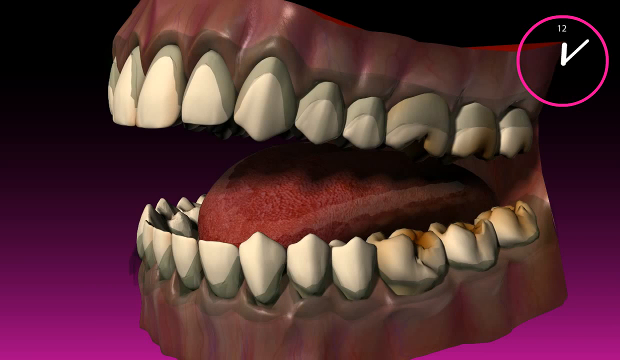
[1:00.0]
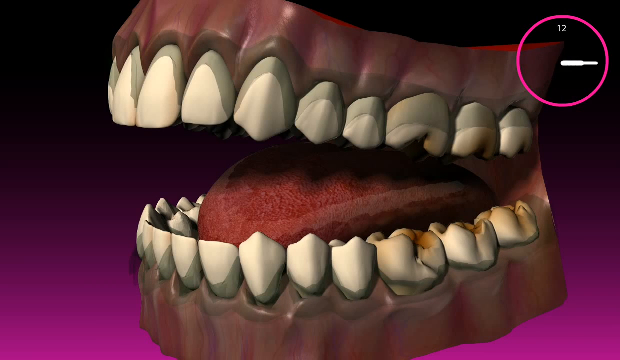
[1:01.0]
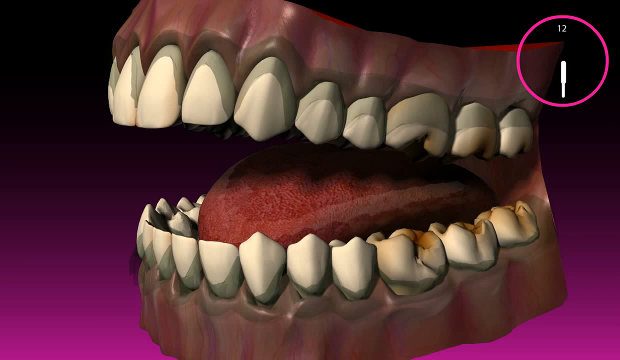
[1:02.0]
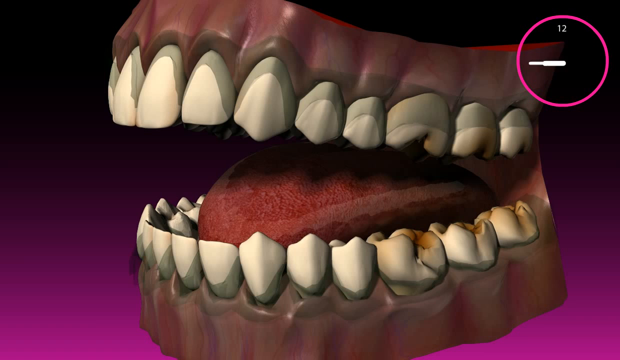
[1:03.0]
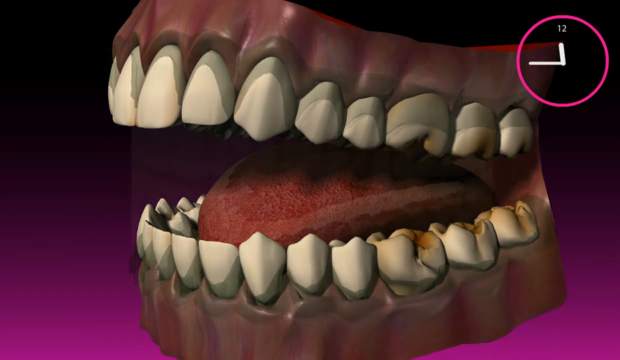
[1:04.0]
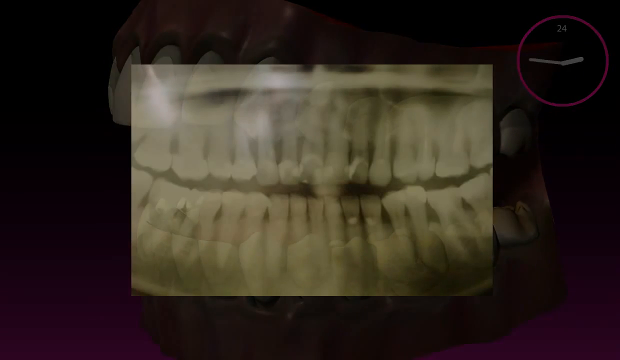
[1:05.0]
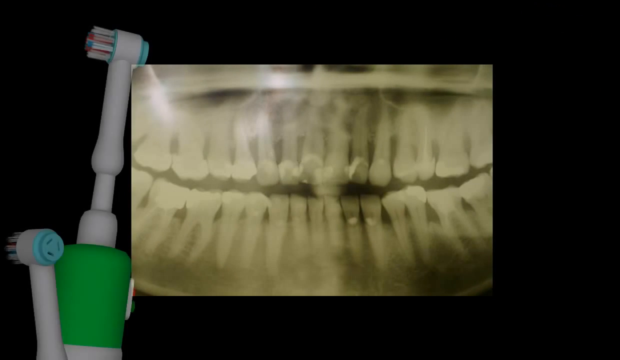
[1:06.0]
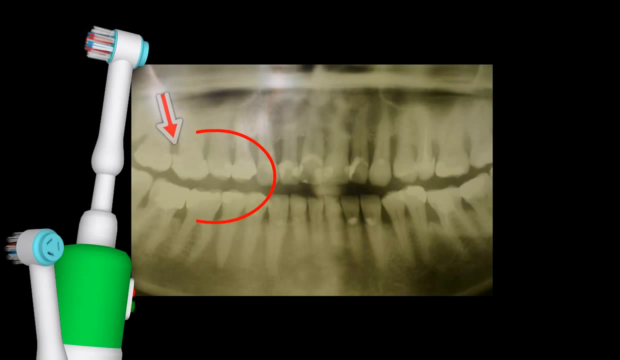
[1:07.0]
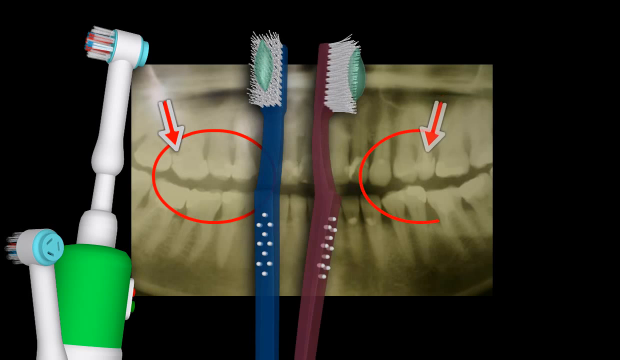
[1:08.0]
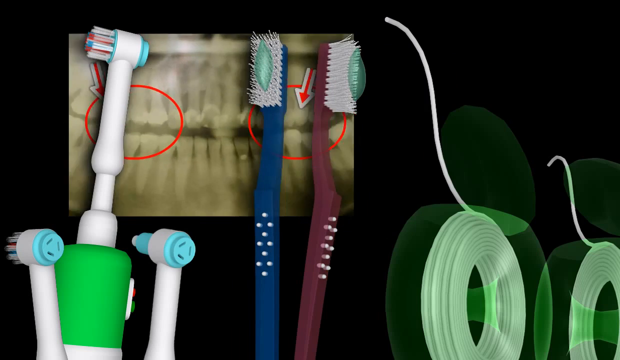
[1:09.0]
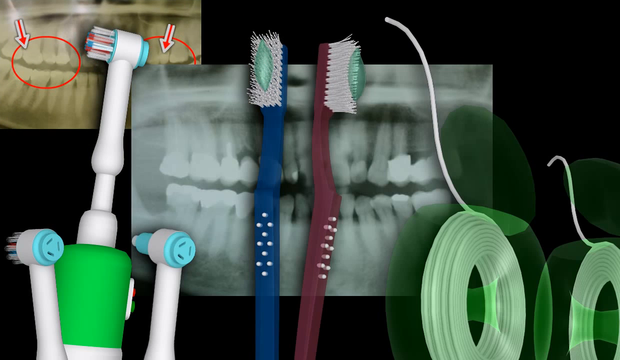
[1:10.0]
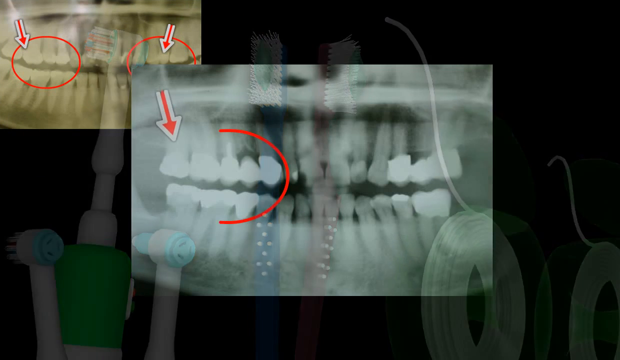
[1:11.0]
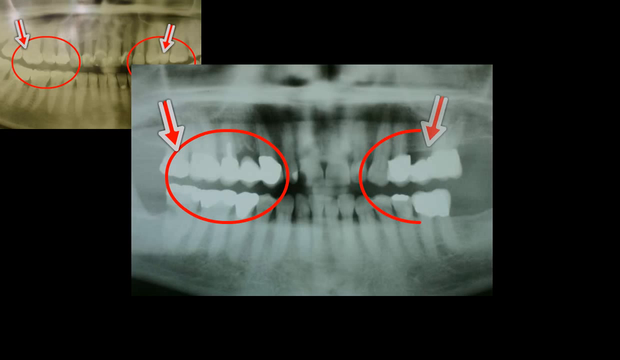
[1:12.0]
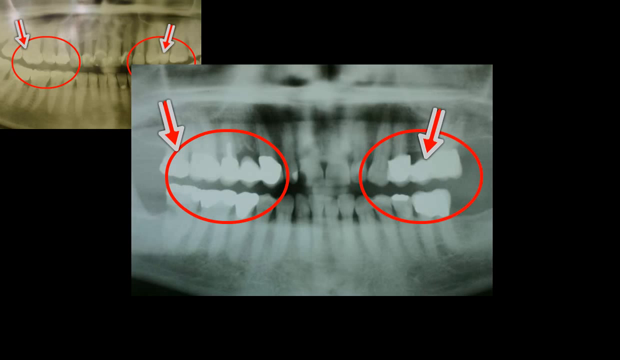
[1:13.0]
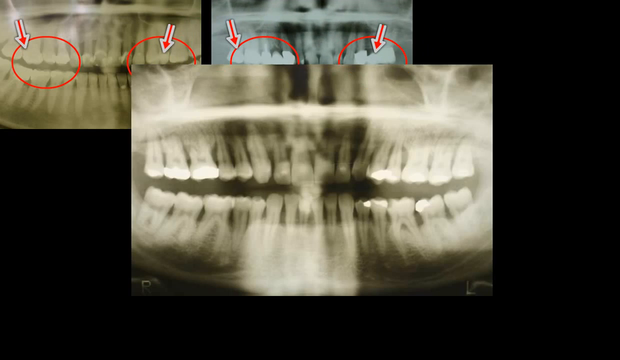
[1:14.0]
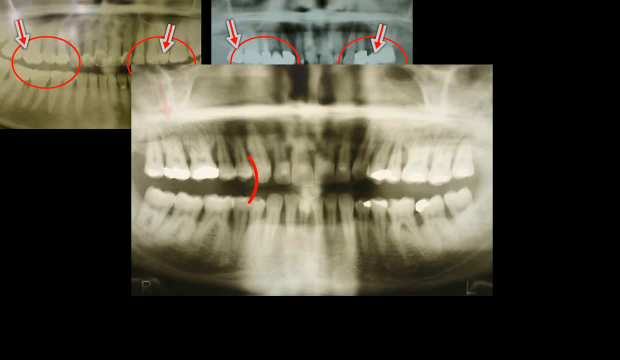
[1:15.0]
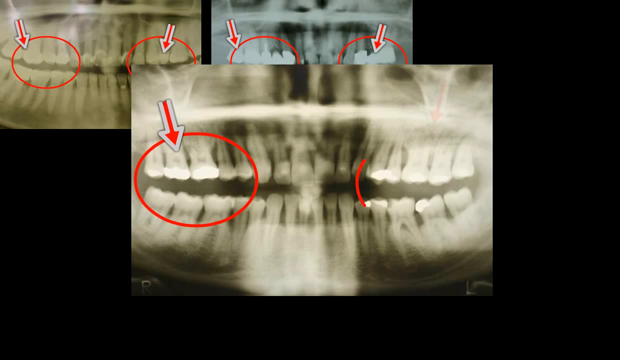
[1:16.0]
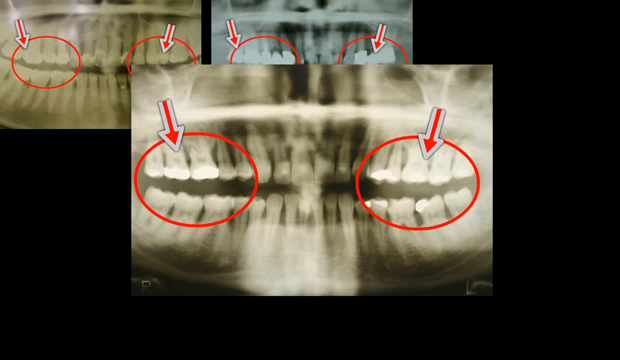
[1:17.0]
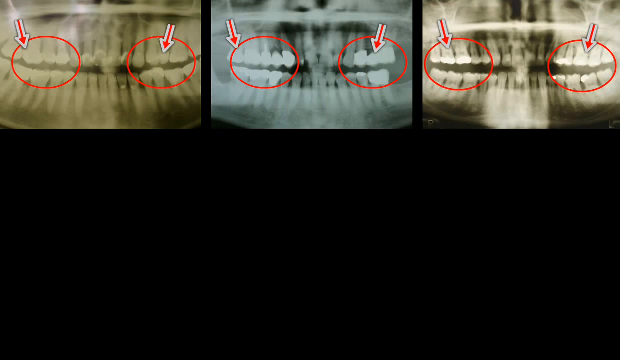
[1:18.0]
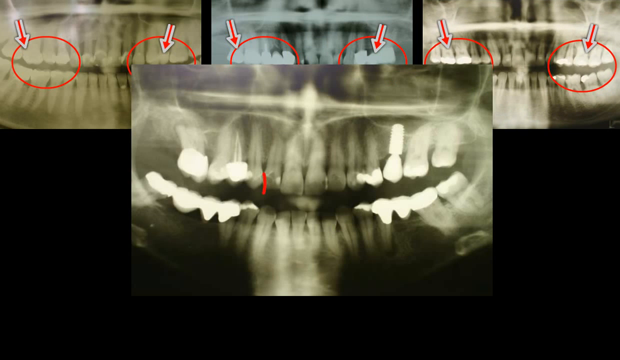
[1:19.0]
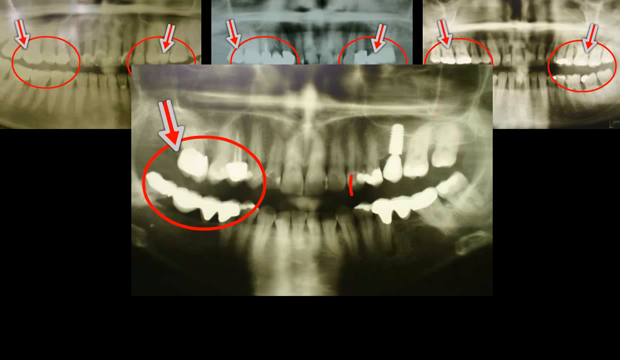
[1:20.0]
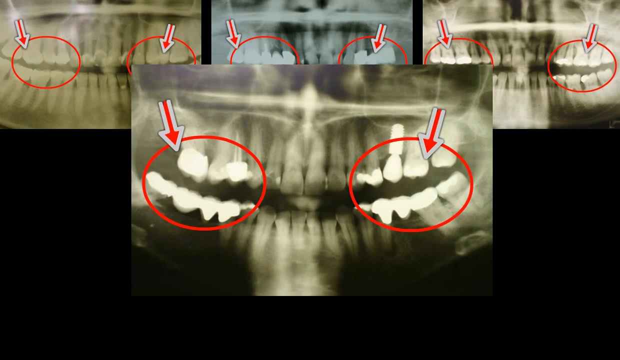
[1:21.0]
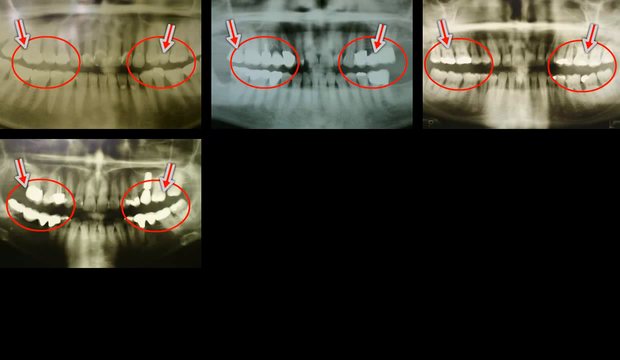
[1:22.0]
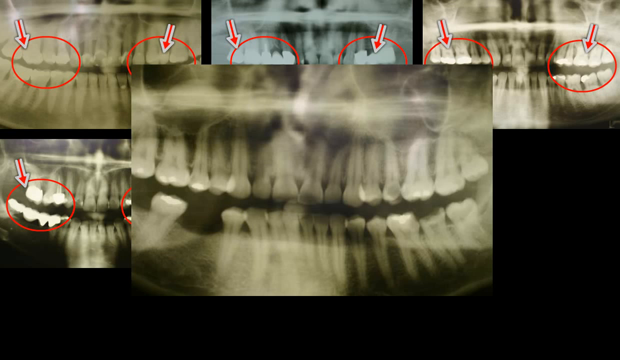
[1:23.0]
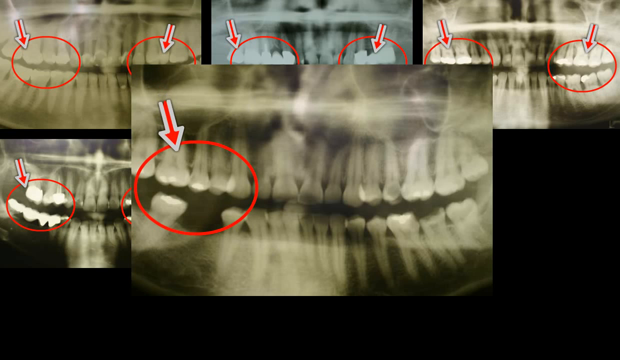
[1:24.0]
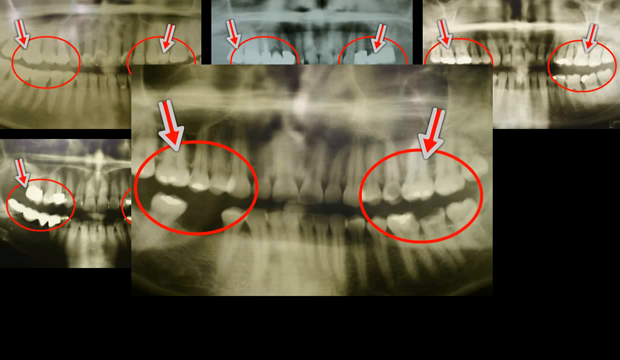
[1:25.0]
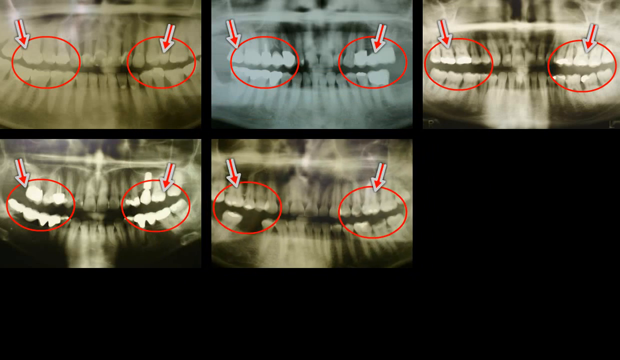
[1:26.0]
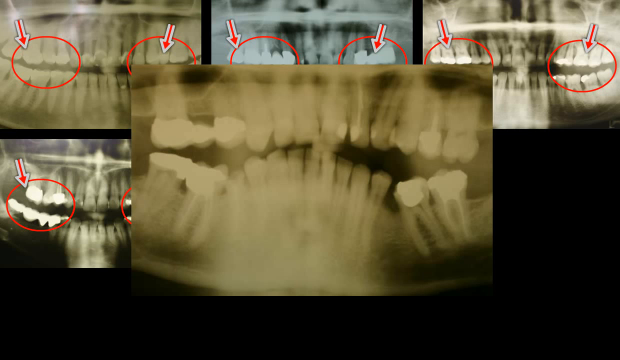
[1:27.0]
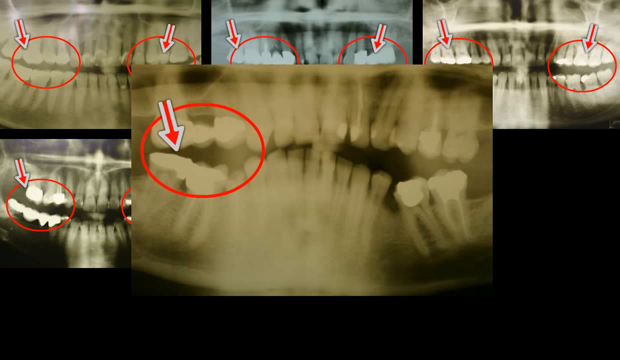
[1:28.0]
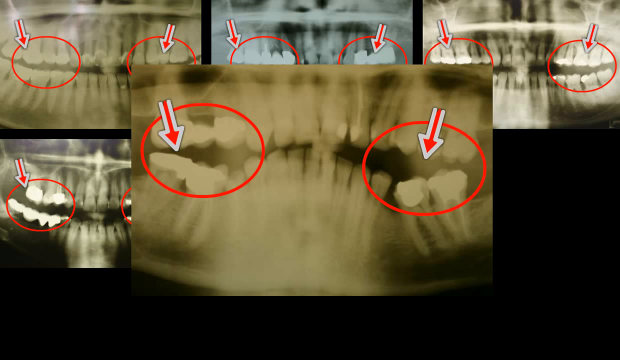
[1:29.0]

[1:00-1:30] A 3D model of an open mouth shows the teeth, the gums surrounding them, and the tongue sitting at the bottom of the teeth. In the top right is an abstract clock: a pink circle with the number 12 at the top and white hour and minute hands moving very, very quickly. While the hands move, the teeth in the model deteriorate, becoming more brown, with a gray portion growing on the top of the teeth. The scene changes to an X-ray of two rows of teeth in the center of the screen on a black background. On the left side is a computer-animated toothbrush with rotating heads, white on top and green on the bottom. Two regular toothbrushes also appear: the left one has a blue handle, and the right one has more of a purple handle and green toothpaste on white bristles. On the X-ray, red circles are drawn around the left and right sides of the teeth, with an arrow pointing to each circle. The X-ray shrinks and moves to the top left, and another X-ray appears in the background. Two rows of floss appear in the bottom right, all 3D animated: the flossers are green with a single curved strand of white floss curving upward and to the left. All the toothbrushes and flosses disappear. Red circles appear on the left and right sides of the mouth in the center X-ray, with red arrows pointing to each. That X-ray shrinks and is placed to the right of the other X-ray. A new X-ray appears in the center with red circles drawn on the left and right sides of the teeth and arrows pointing to each, and then it moves to the top right. Another X-ray of more teeth appears in the middle with red circles on the left and right sides and red arrows, and it moves to the bottom left. Another X-ray appears in the center of the screen with red circles drawn on its left and right sides and red arrows pointing to each. Then another X-ray appears with red circles drawn on the left and right sides of the teeth and arrows drawn on each circle.